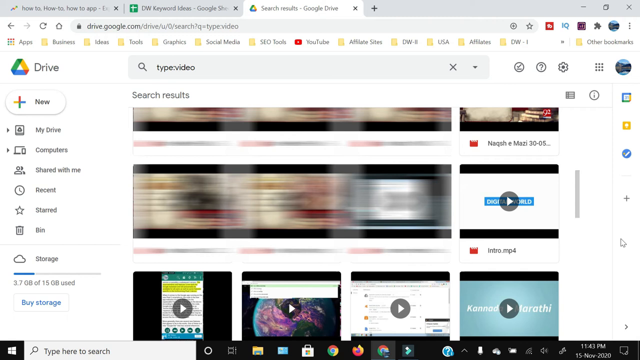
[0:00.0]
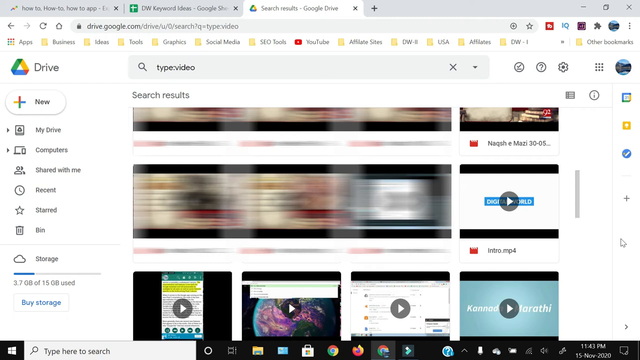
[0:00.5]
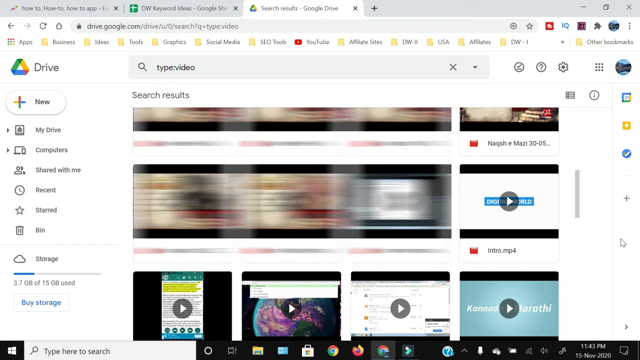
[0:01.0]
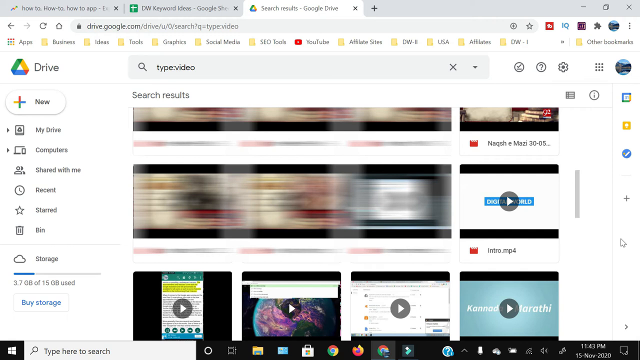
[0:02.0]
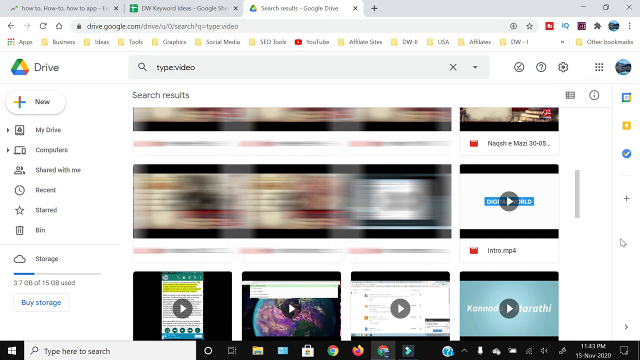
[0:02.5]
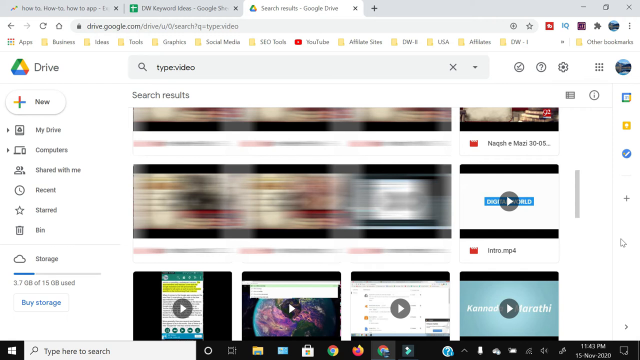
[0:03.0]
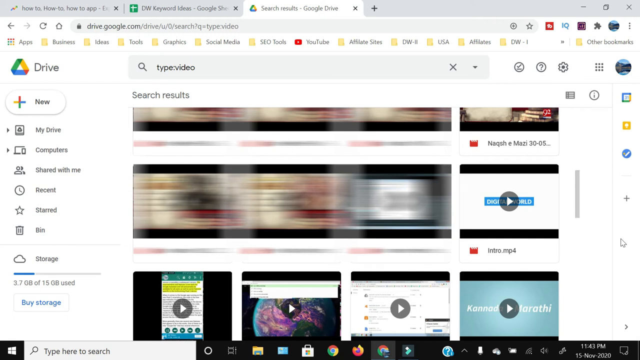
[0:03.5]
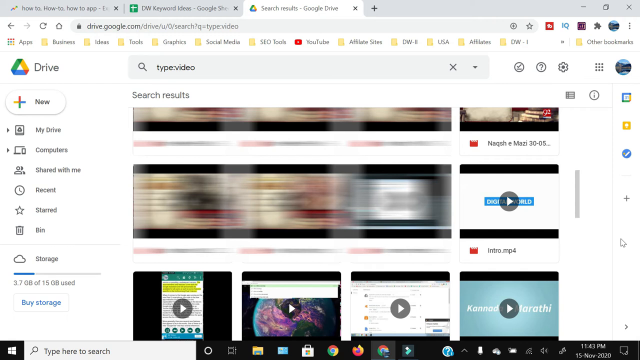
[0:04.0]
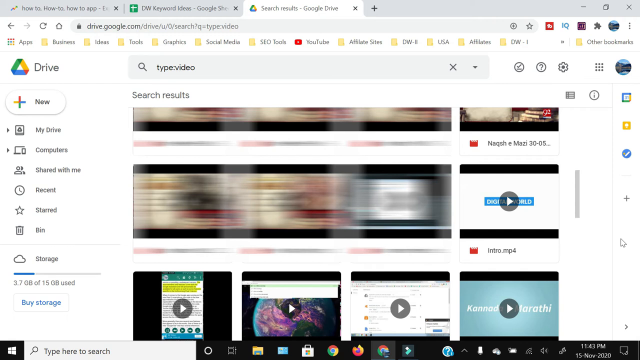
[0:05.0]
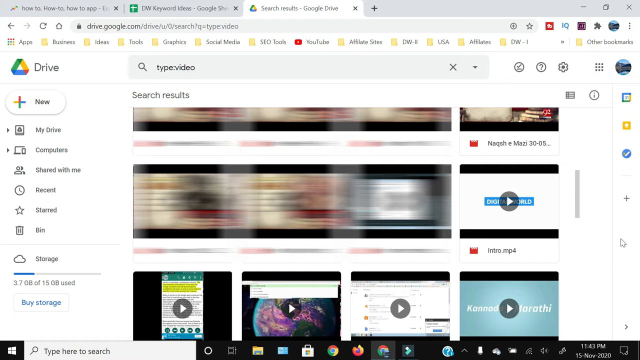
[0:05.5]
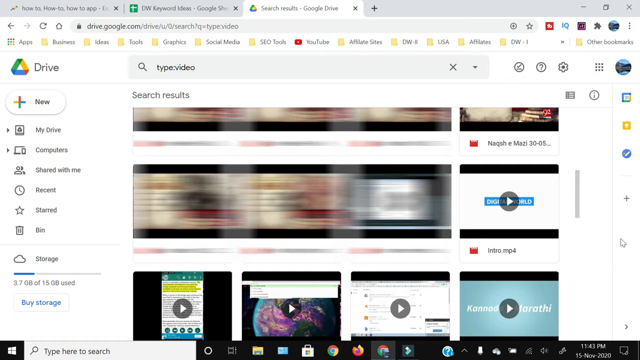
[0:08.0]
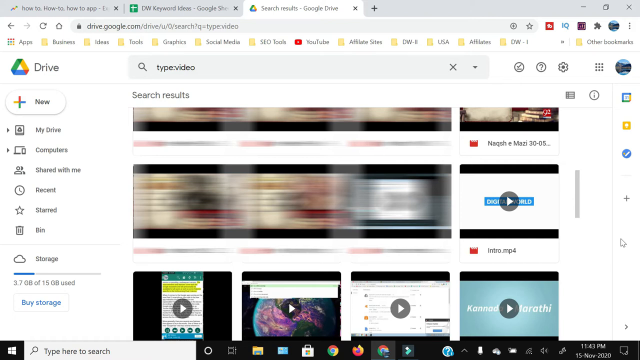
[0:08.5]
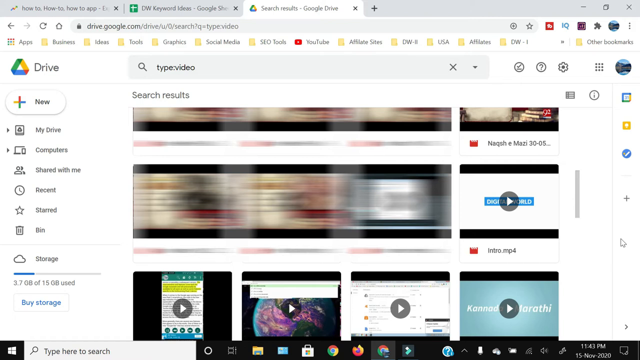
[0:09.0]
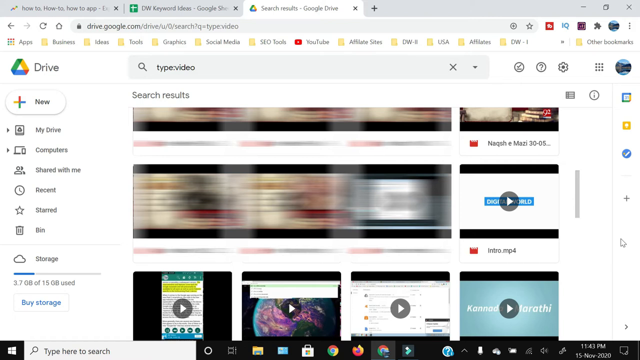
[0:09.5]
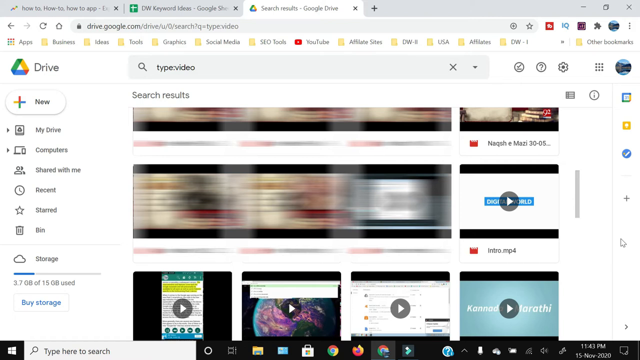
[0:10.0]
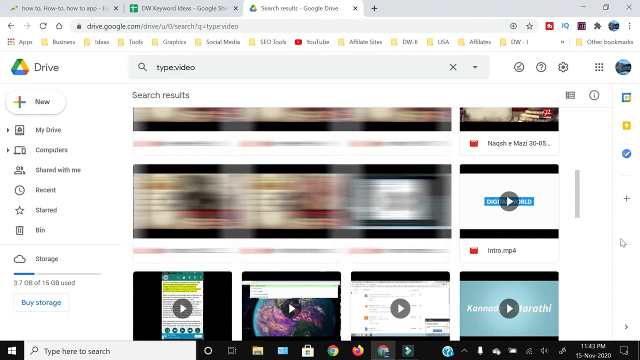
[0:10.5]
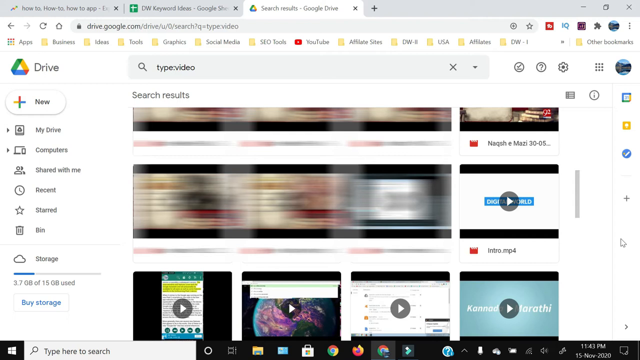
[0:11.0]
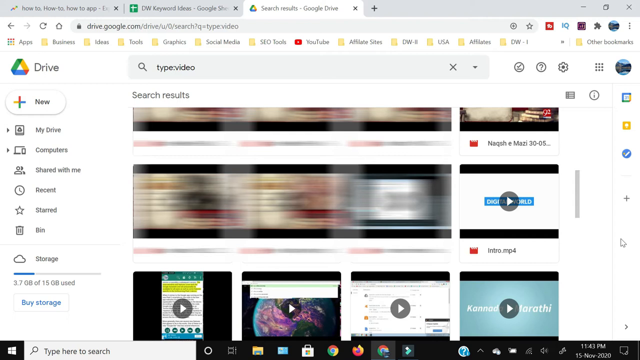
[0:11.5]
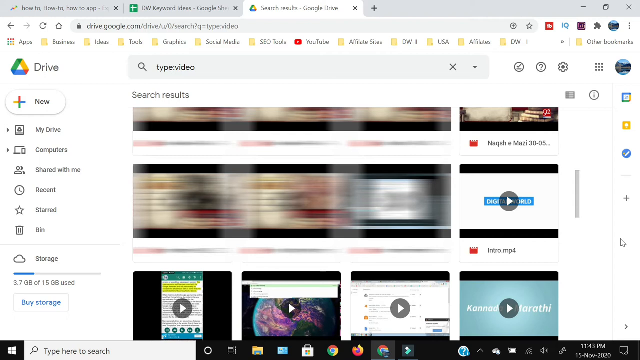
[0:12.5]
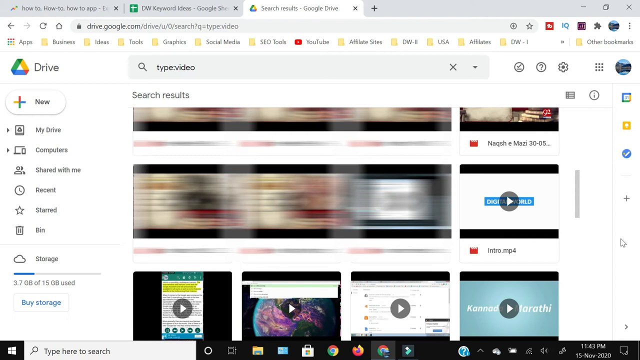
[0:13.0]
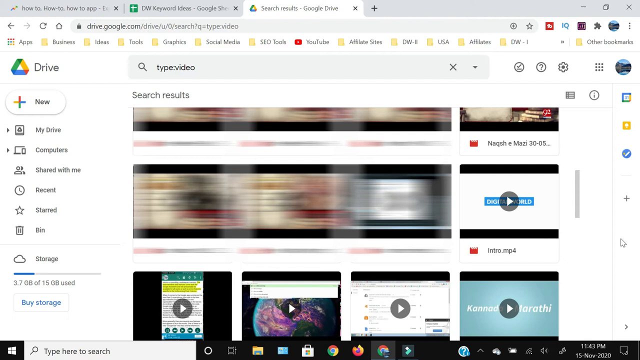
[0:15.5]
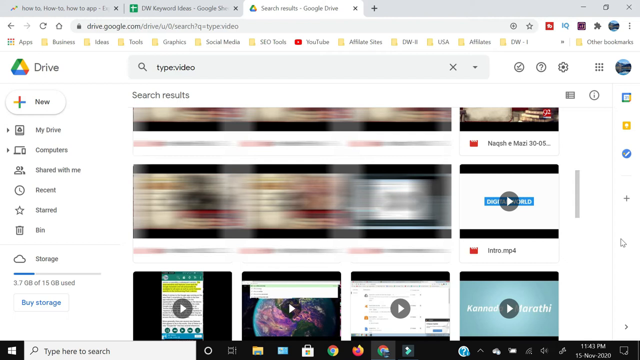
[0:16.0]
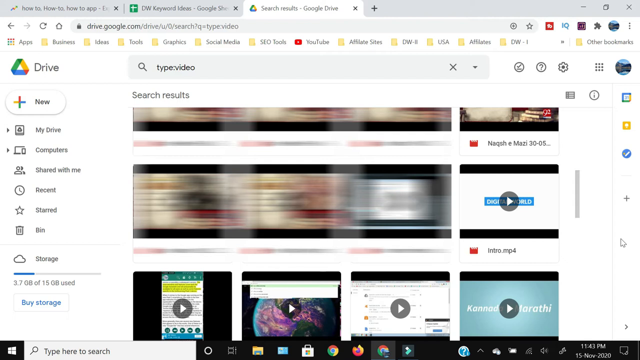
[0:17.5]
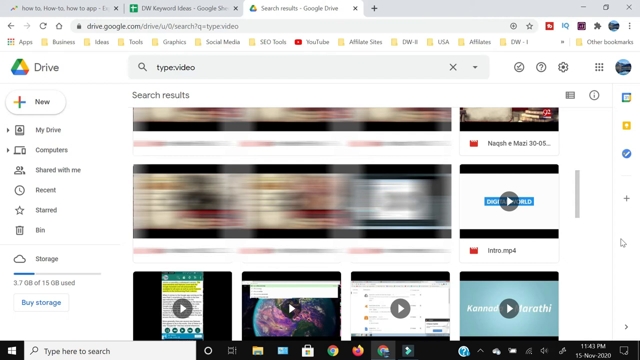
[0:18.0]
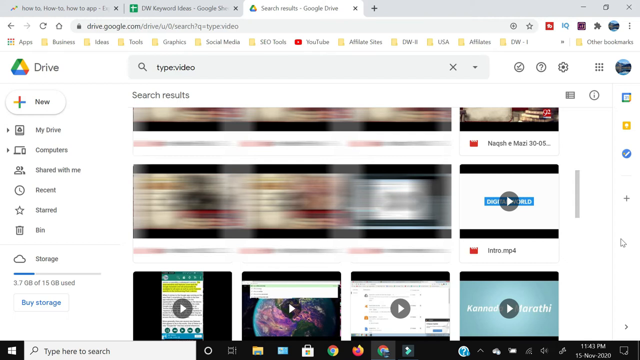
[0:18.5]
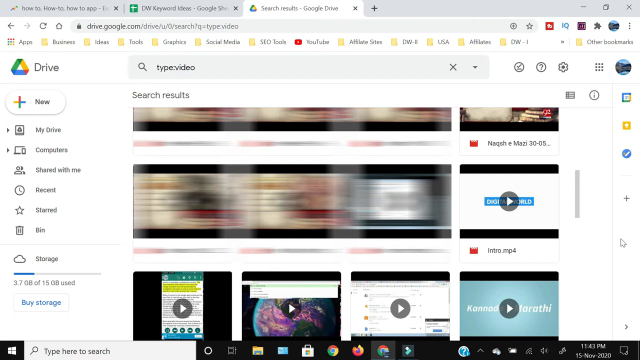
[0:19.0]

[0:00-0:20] A Google Drive page is on screen, with "type:video" in the search box. Many videos are listed, and some of the titles seem to be in Arabic; among them are Kannada and Marathi items. Some of the videos look blurry, either because the picture itself was blurry or possibly because something was covered up. The computer also has a Google page open for "how to how to how to app" and a Google spreadsheet titled "DW keyword ideas Google sheets." A profile picture appears in the corner, but no name is shown.